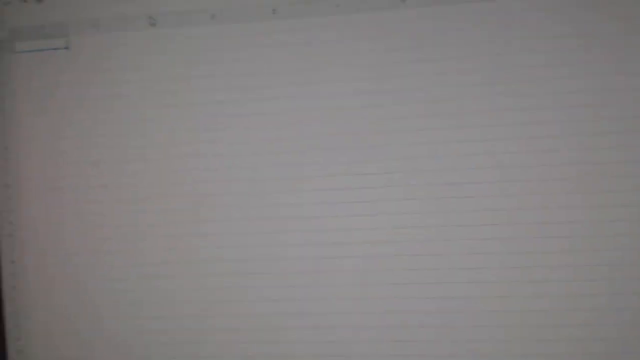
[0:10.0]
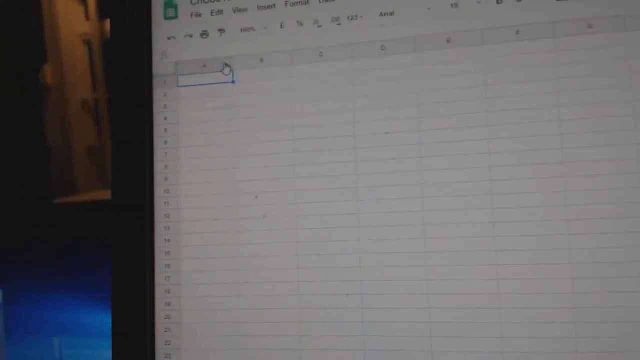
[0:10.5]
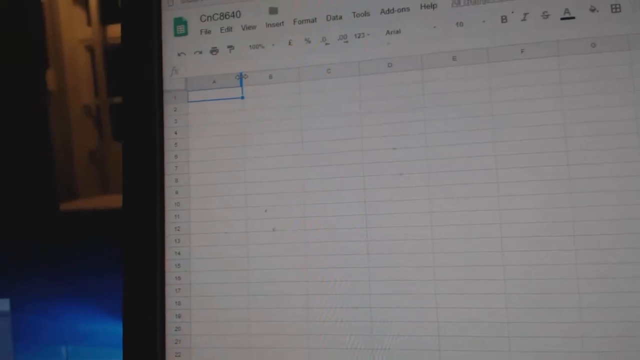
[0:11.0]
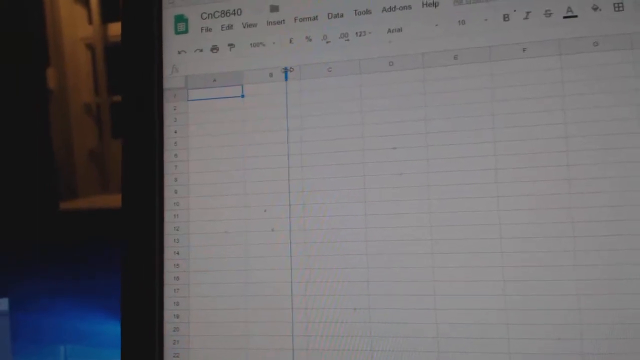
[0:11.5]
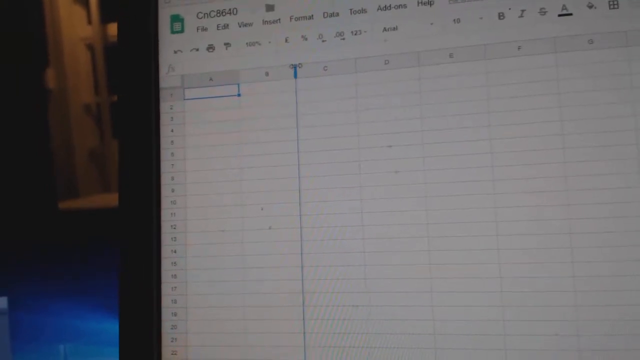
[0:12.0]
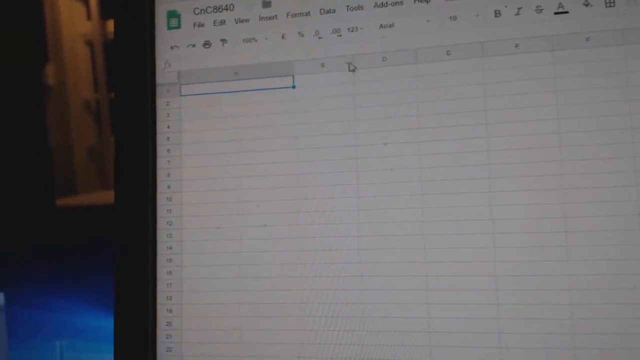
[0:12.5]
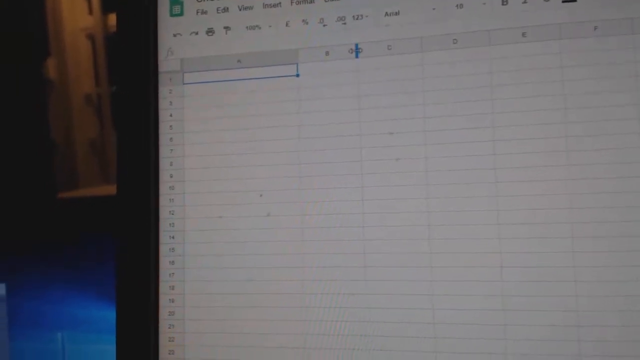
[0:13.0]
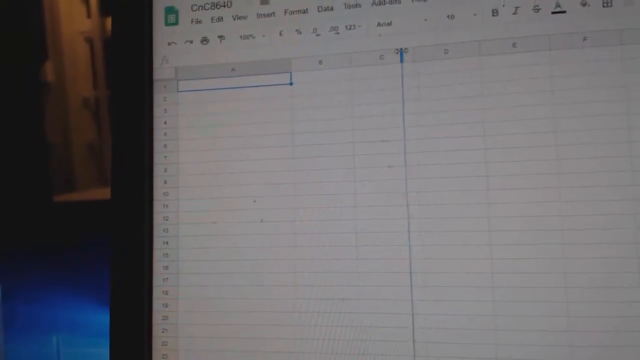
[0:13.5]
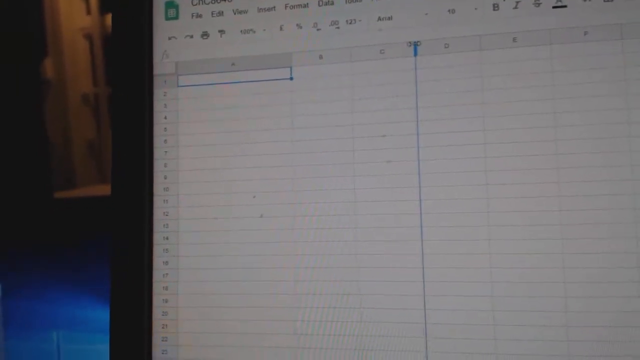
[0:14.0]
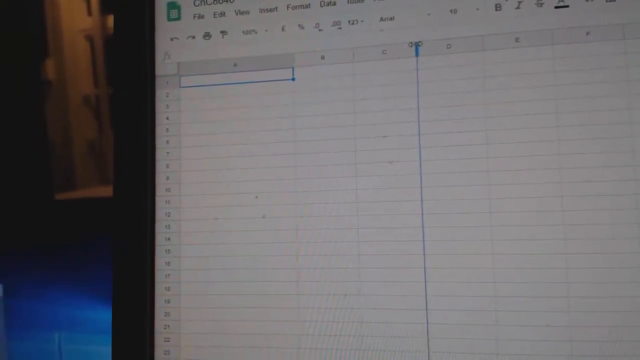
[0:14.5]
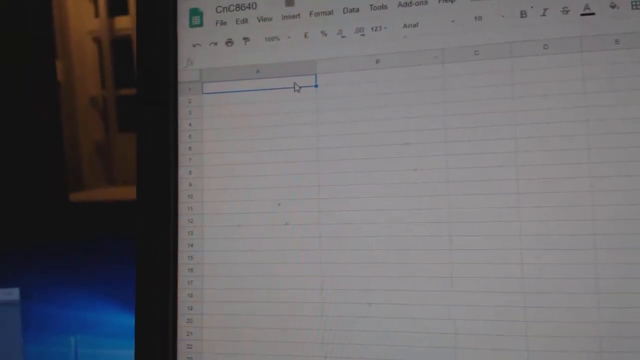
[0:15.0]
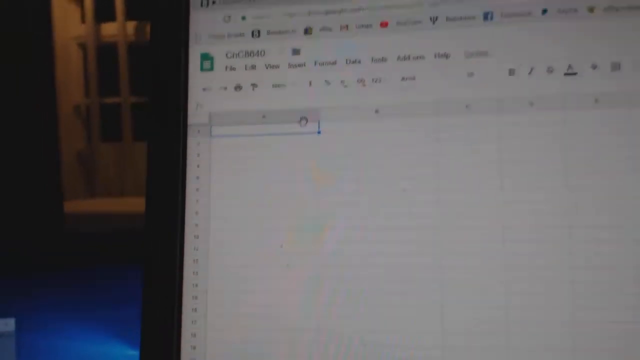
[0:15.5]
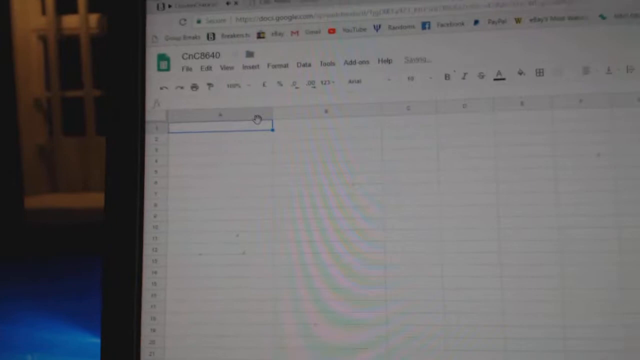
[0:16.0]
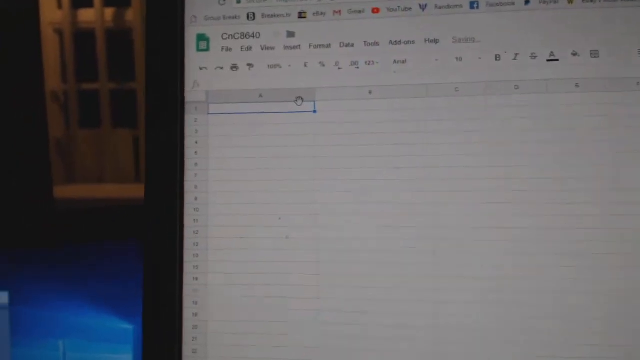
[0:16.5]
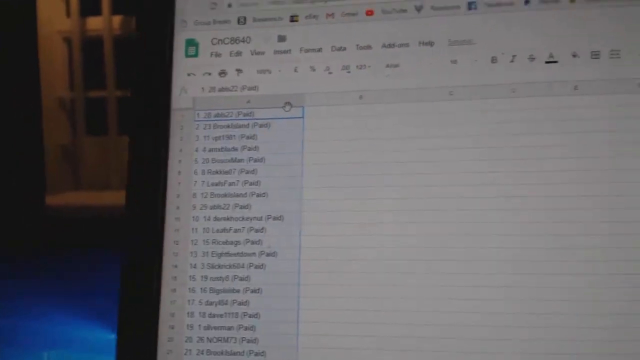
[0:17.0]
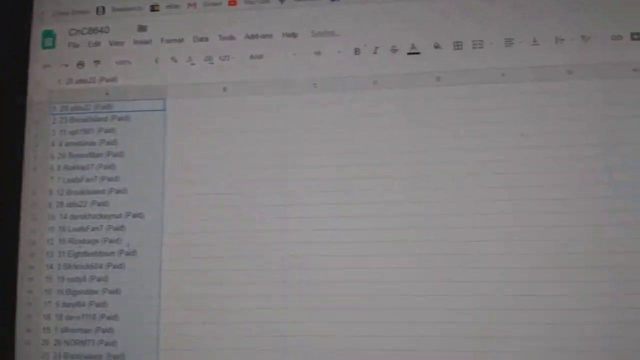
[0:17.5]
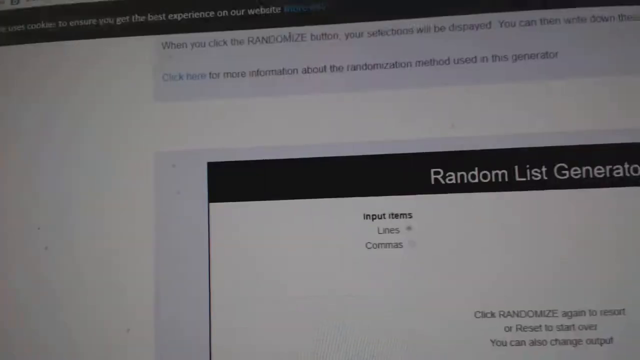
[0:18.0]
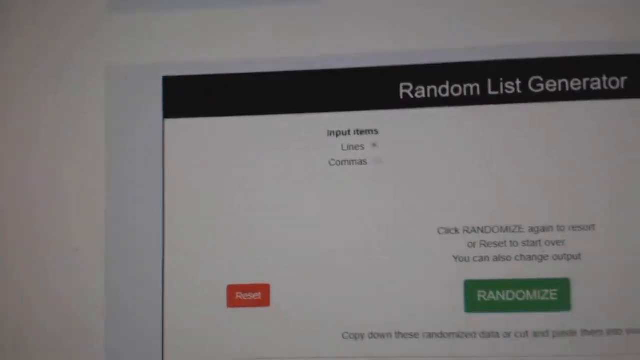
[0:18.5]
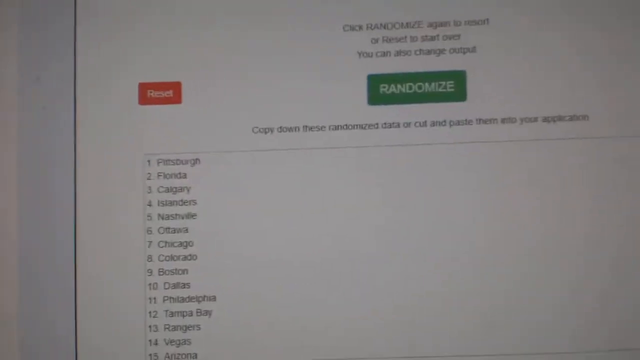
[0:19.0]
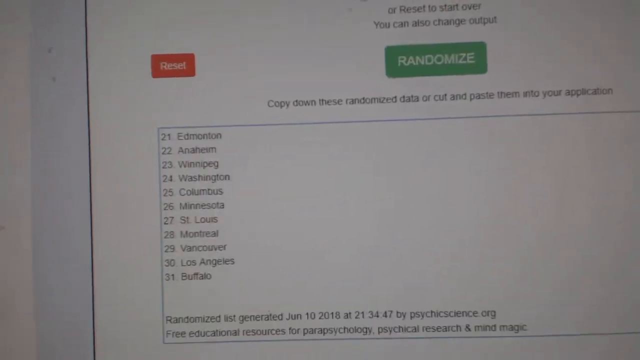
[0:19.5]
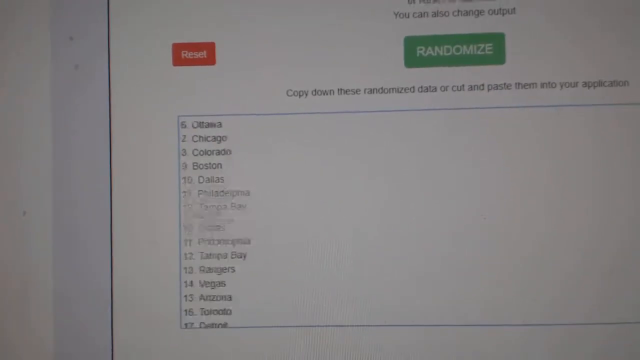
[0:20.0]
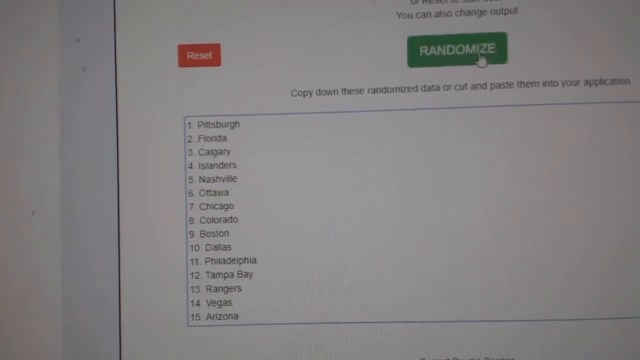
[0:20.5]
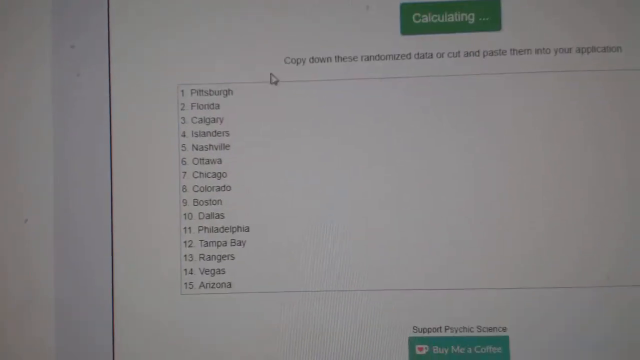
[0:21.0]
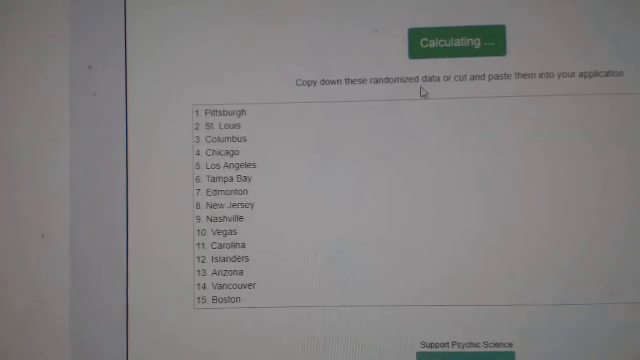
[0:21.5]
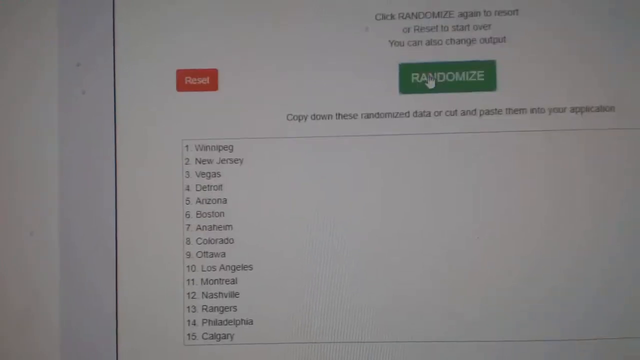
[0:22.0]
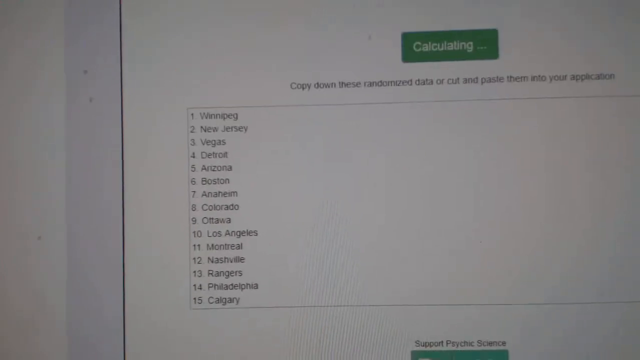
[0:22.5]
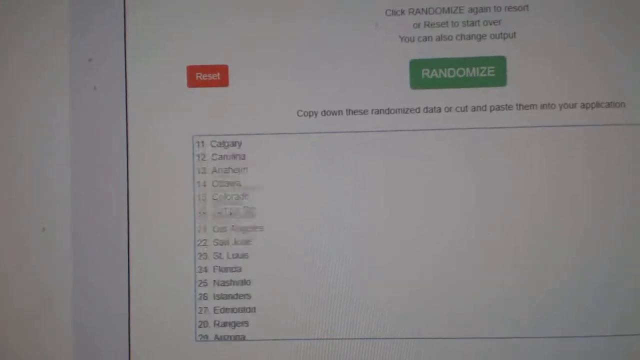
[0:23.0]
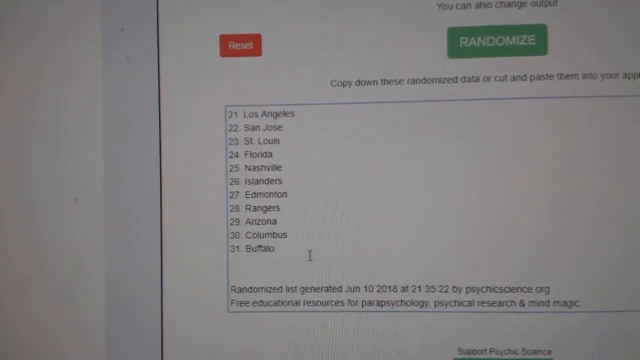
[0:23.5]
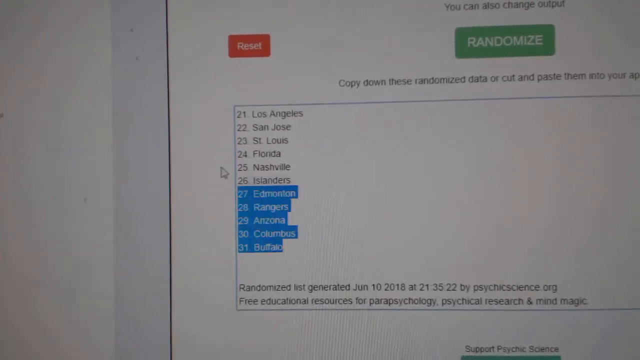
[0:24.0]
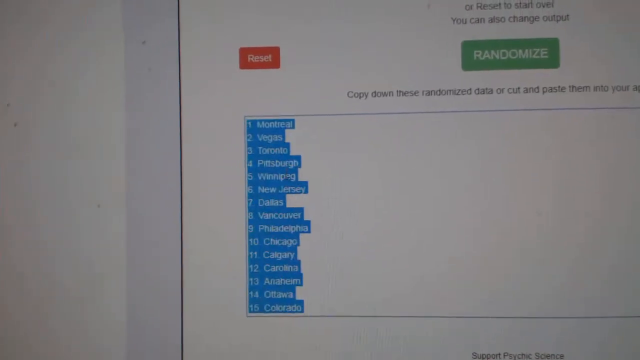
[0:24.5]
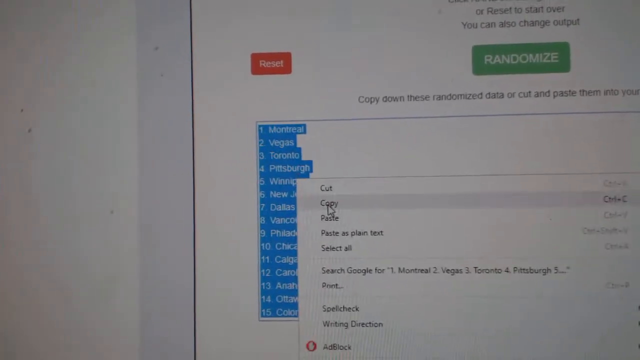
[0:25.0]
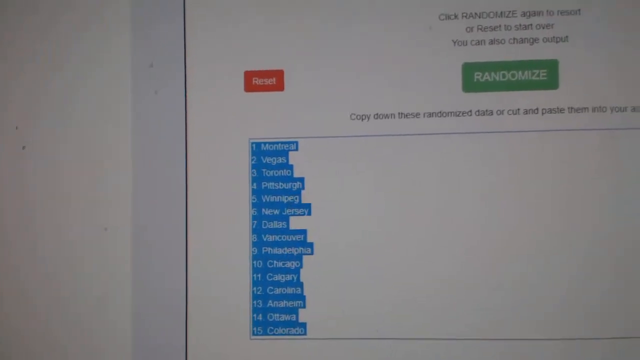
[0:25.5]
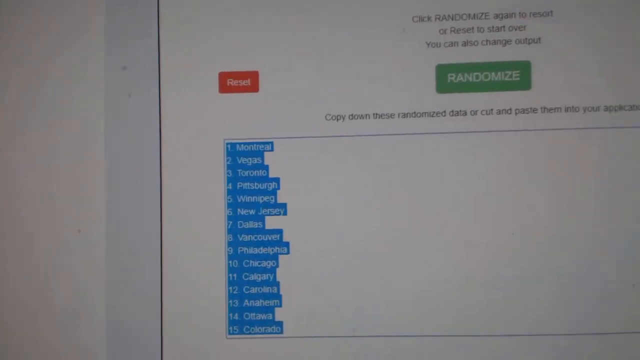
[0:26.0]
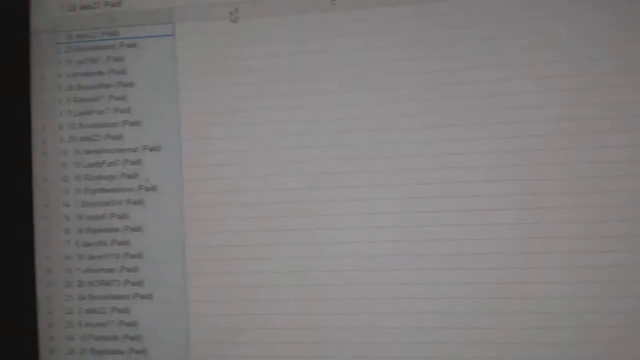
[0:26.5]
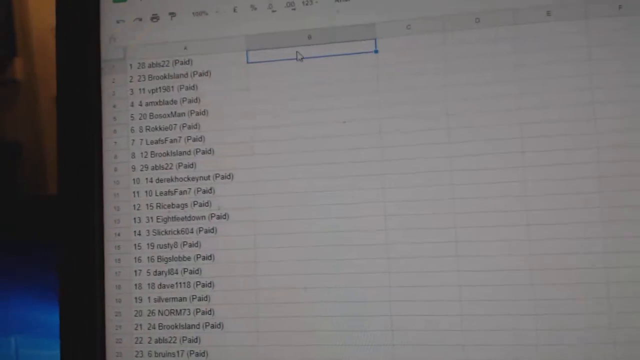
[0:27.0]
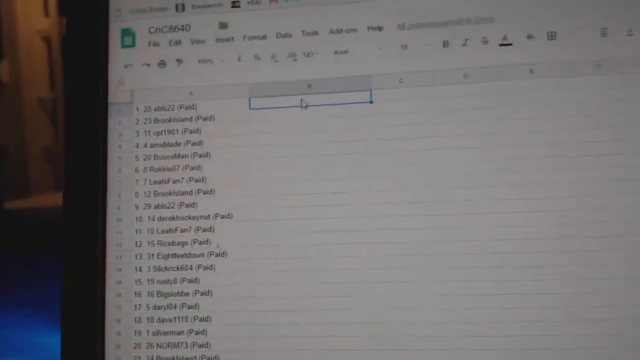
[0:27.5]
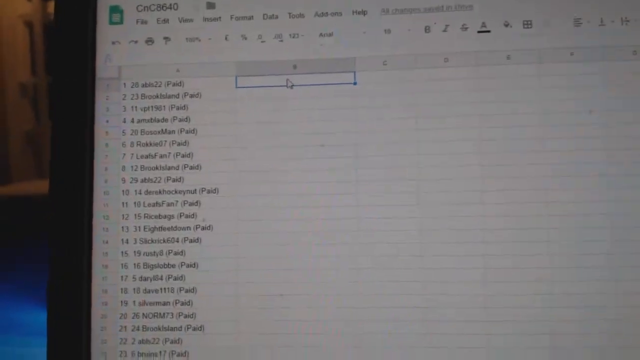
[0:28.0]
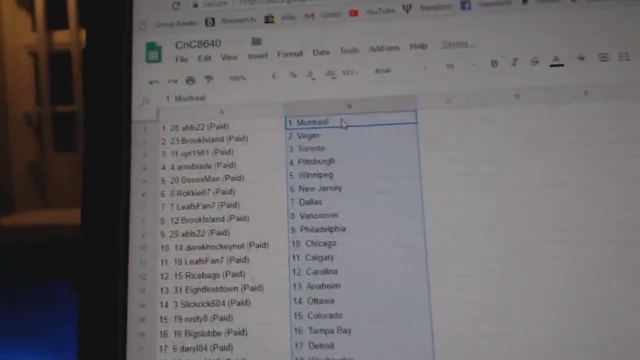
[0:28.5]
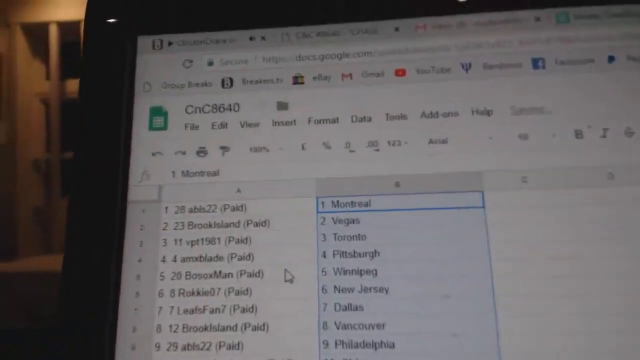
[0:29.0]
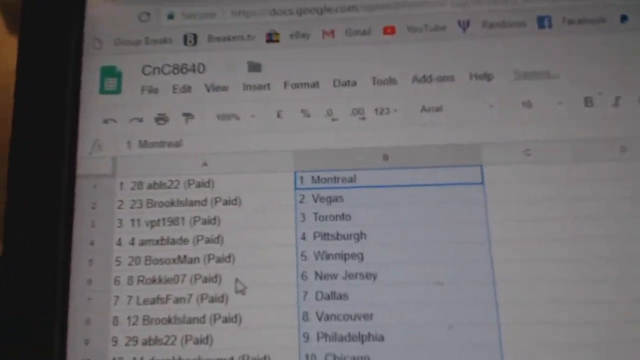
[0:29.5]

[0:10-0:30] The video is very shaky and blurry. It shows what looks like Excel or some other spreadsheet application, apparently a Google spreadsheet, with the title "CNC8640" at the top. A white mouse cursor appears to go over cell A and drags the A column to the right a bit to widen it, then does the same with the B column. The mouse goes to the A column and appears to paste a list, which is highlighted in blue. The video then transitions back to a web page that appears to have a green randomize button at the top and a red reset button at the top left, with a rectangle containing a list. The mouse clicks the randomize button three times, and a new list is generated each time. The mouse goes to the bottom of the list and highlights it all in blue, right-clicks, and selects copy. It returns to the spreadsheet, clicks the first cell in the B column, and apparently pastes the list. The video then zooms in on the list under the B column, whose first entries read "1 Montreal, 2 Vegas, 3 Toronto, 4 Pittsburgh, 5 Winnipeg, 6 New Jersey, 7 Dallas, 8 Vancouver, 9 Philadelphia".